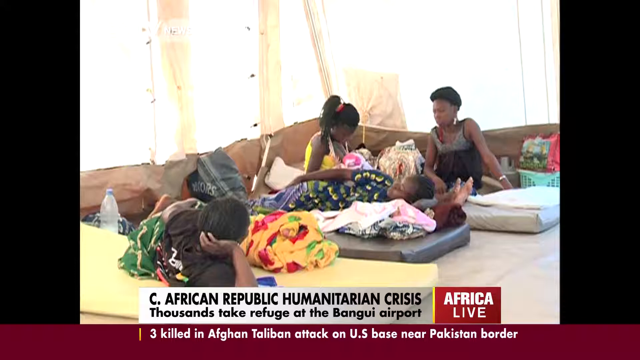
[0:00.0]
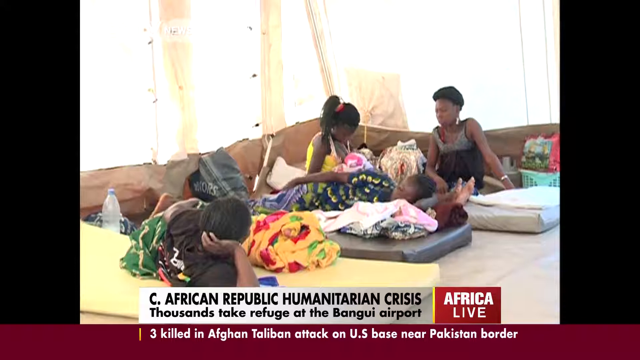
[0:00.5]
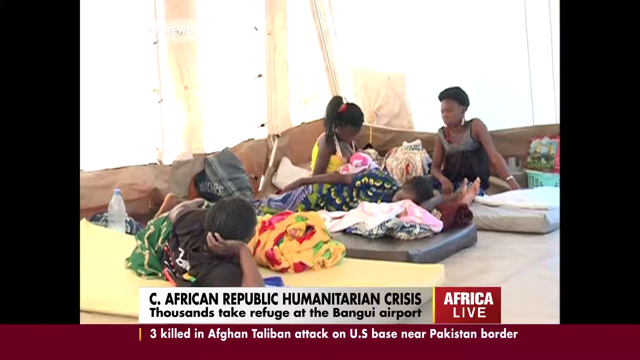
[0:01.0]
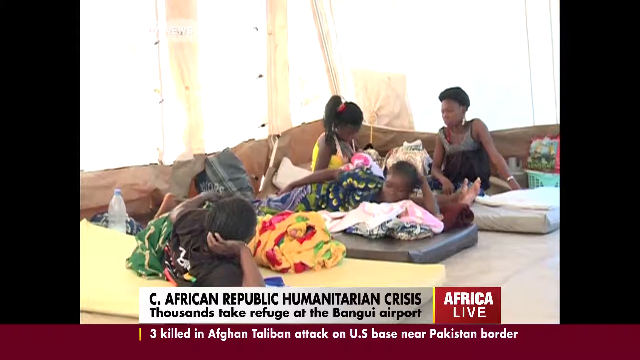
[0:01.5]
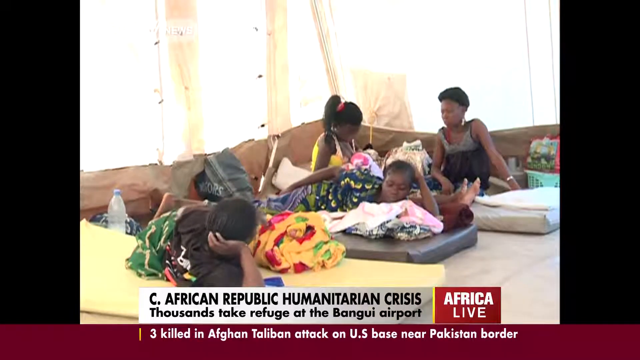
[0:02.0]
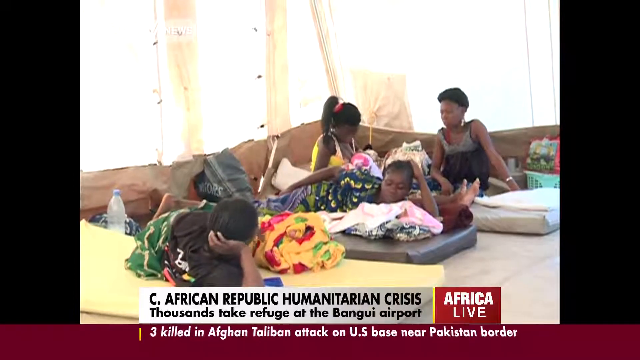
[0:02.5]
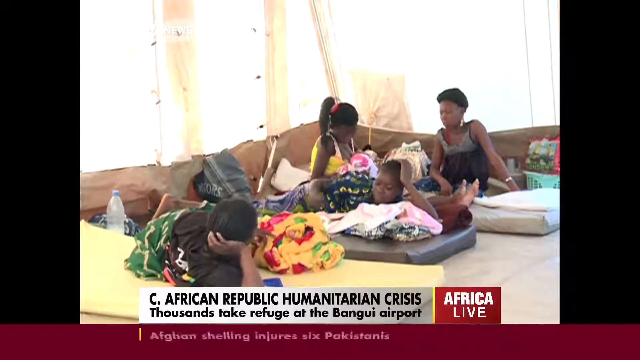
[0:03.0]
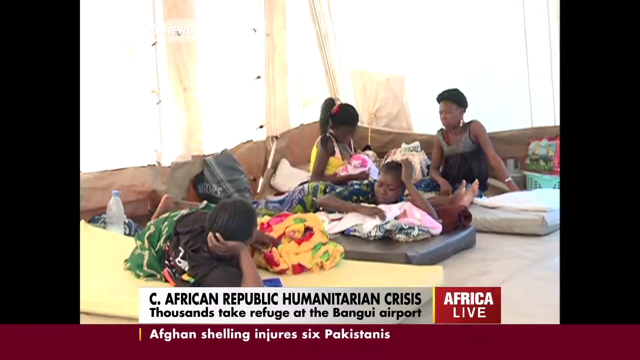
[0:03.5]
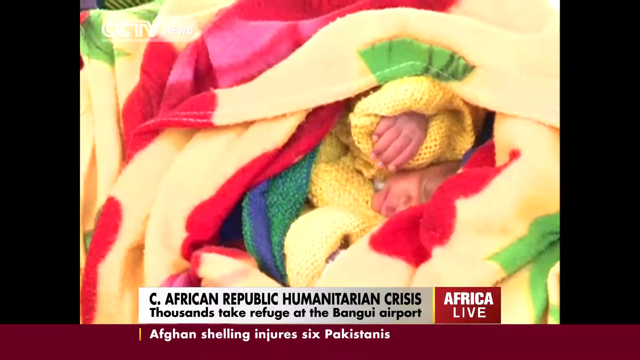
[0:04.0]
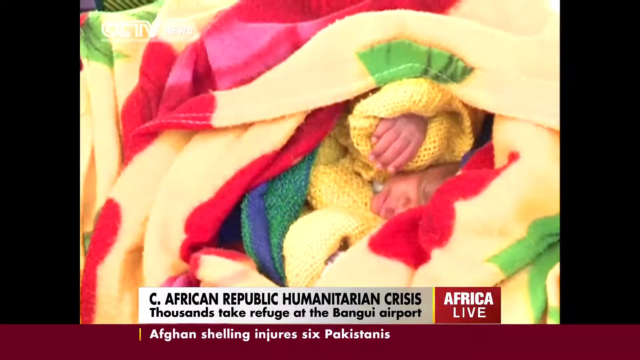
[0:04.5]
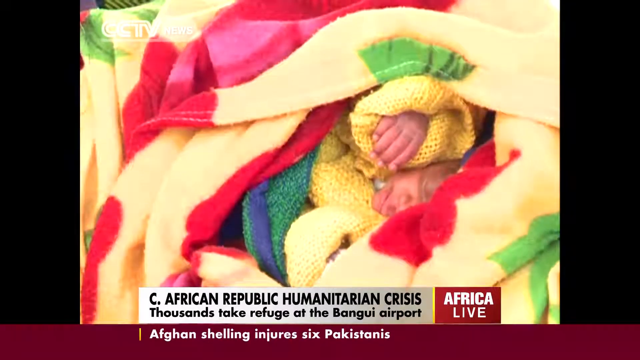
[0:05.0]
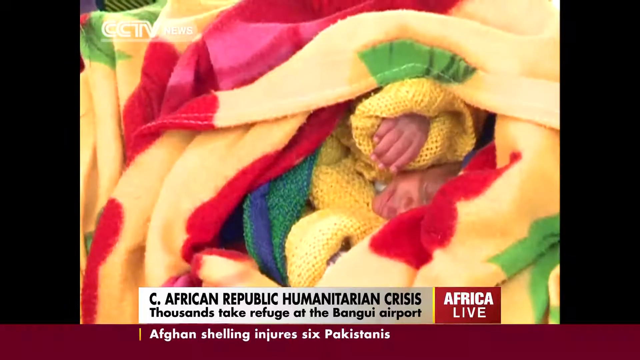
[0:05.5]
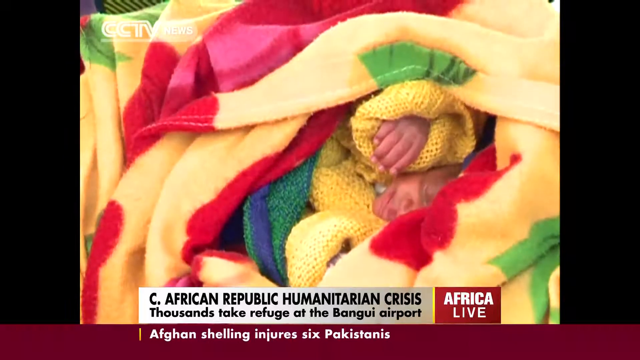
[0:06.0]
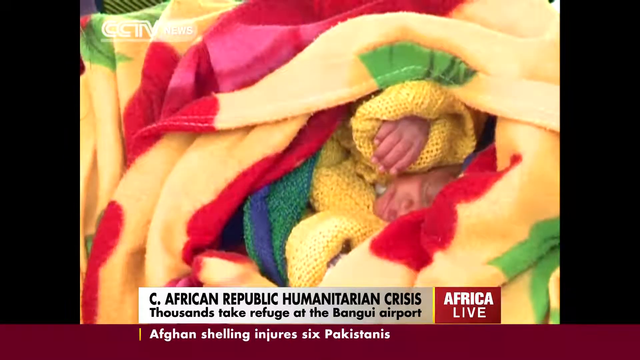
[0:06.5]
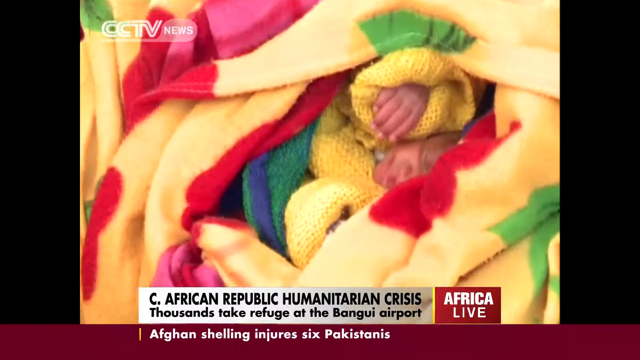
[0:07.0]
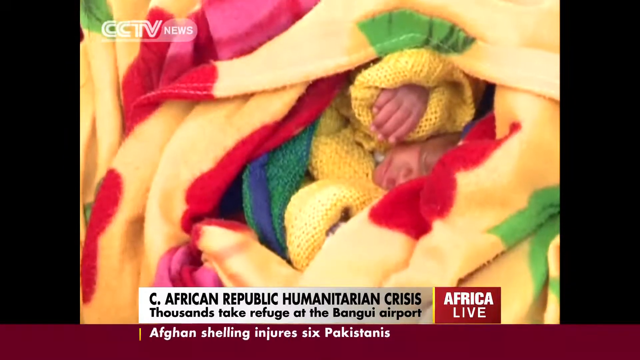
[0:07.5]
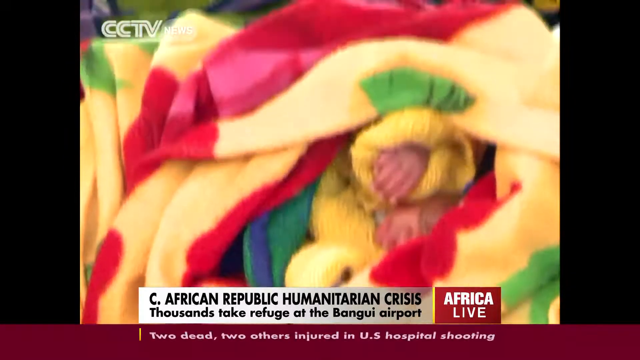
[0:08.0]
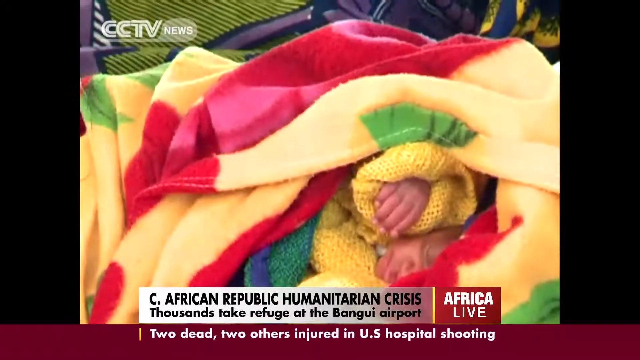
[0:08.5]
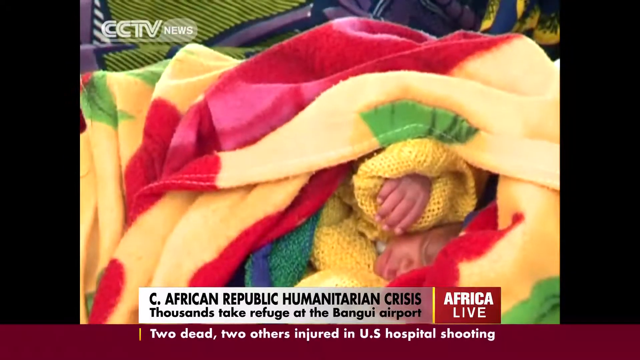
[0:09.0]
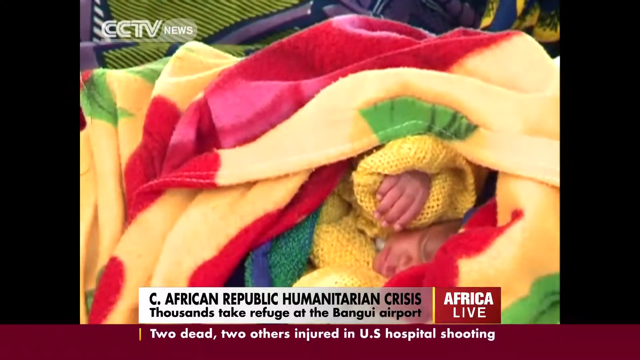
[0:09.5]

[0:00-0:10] This news video has "Africa Live" at the bottom right. It opens with text reading "African Republic humanitarian crisis thousands take refuge at the Bangai Airport" as four people lie down together; they appear to be mostly women. They are clearly lying on the ground, with what appear to be mattresses under them. In another shot, a hand wearing some sort of sweater sticks out of a set of blankets, and the image stays on screen for a moment.